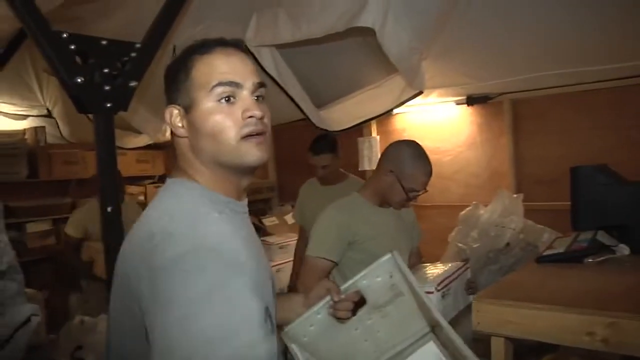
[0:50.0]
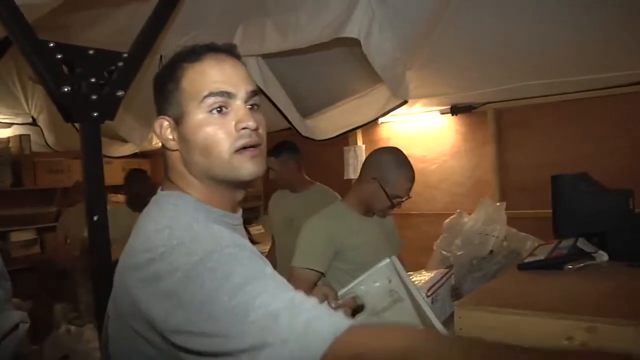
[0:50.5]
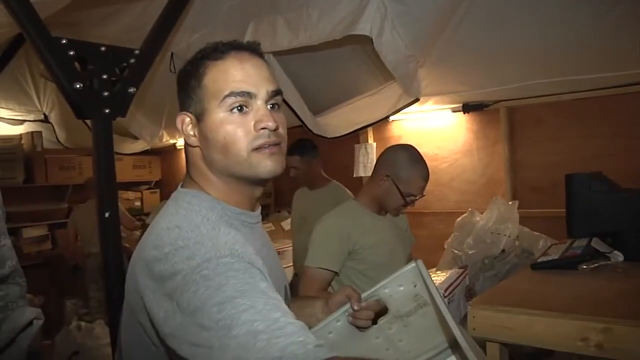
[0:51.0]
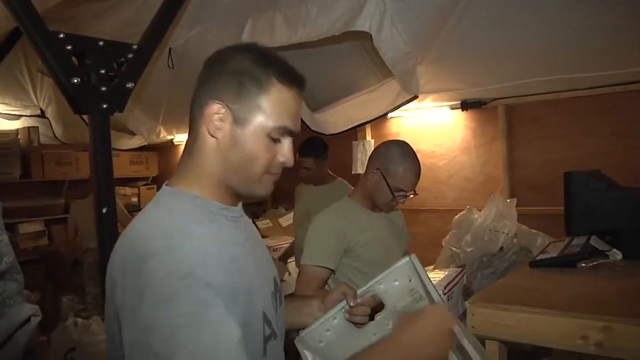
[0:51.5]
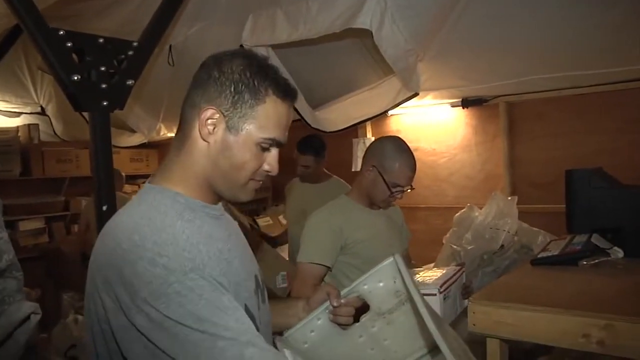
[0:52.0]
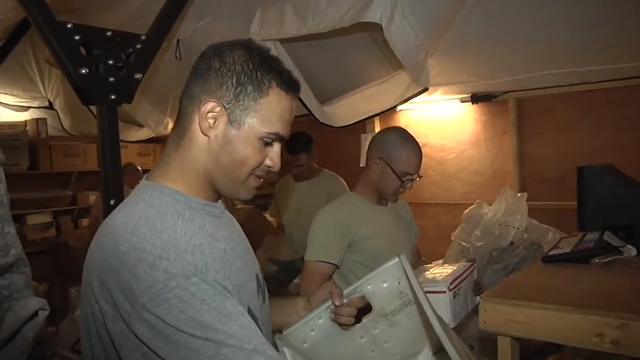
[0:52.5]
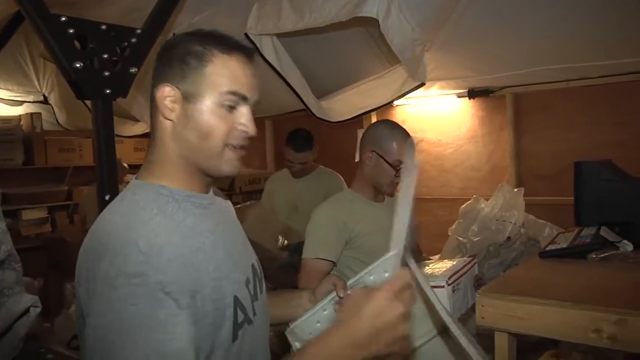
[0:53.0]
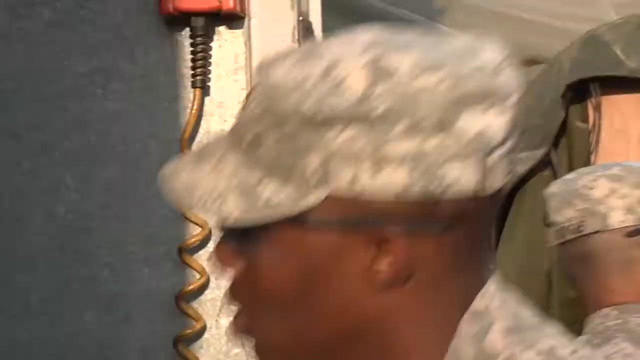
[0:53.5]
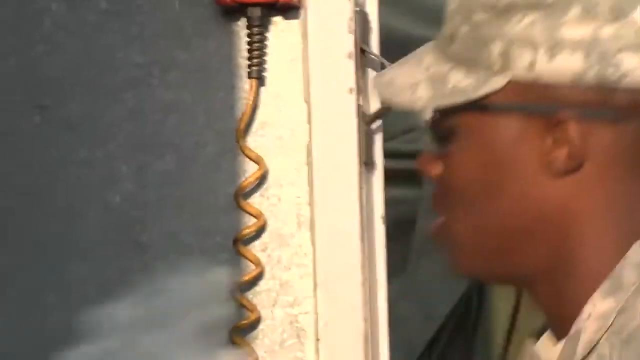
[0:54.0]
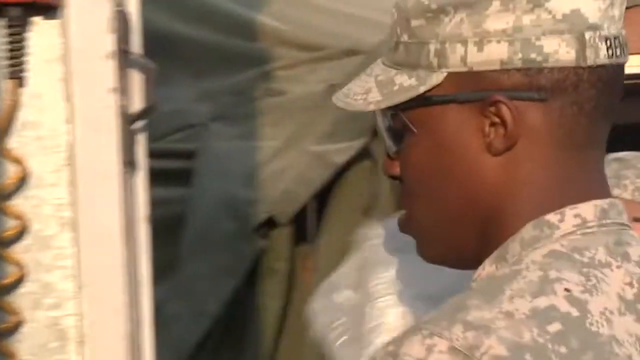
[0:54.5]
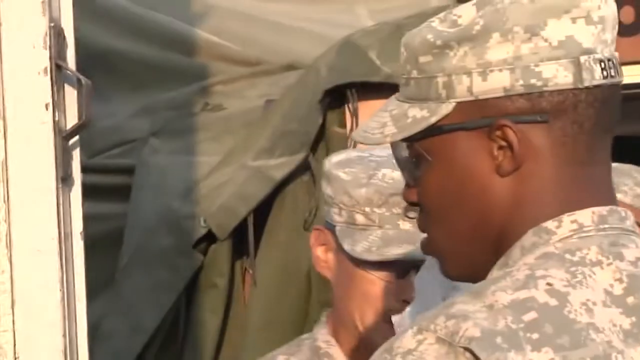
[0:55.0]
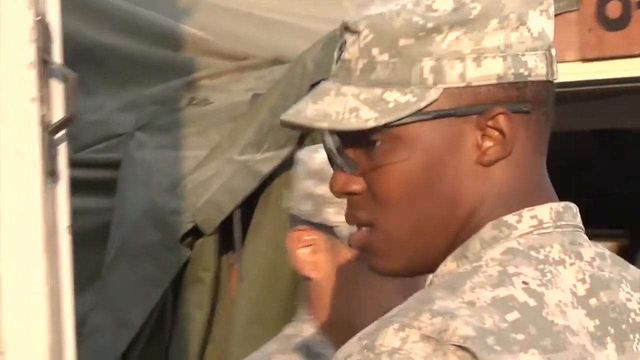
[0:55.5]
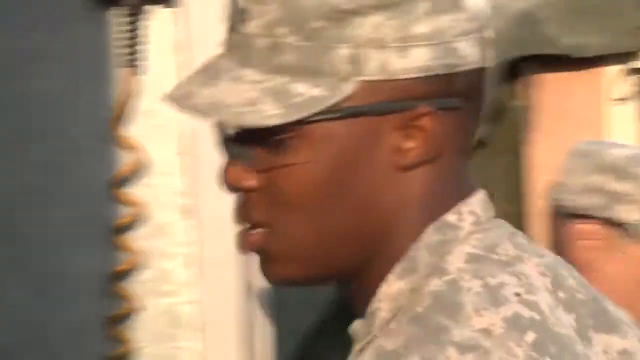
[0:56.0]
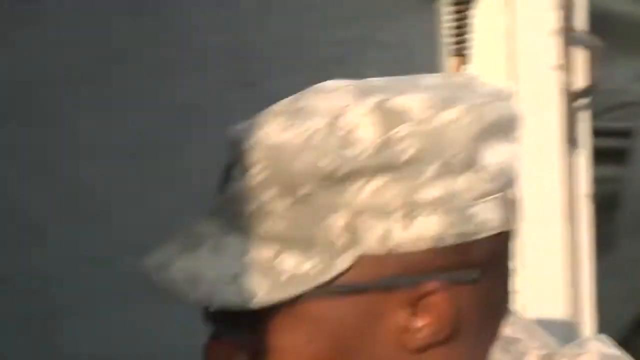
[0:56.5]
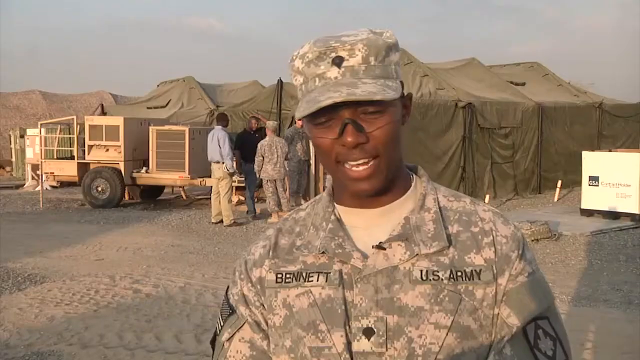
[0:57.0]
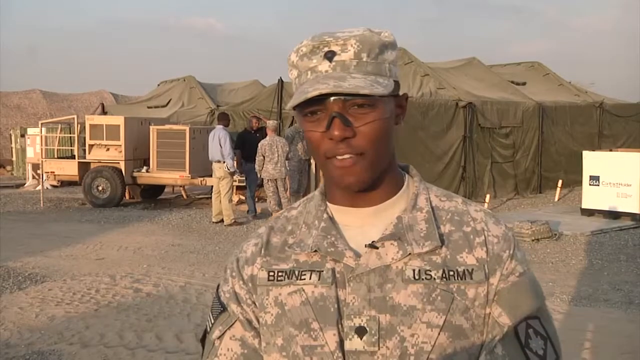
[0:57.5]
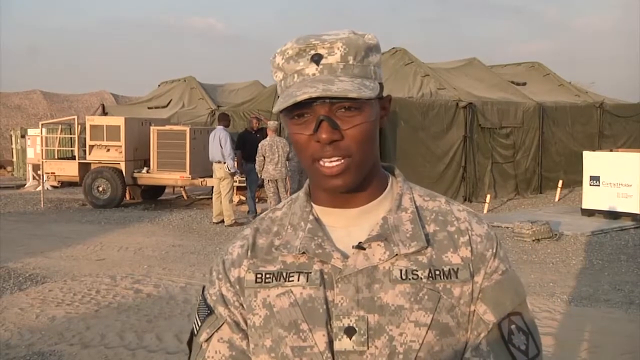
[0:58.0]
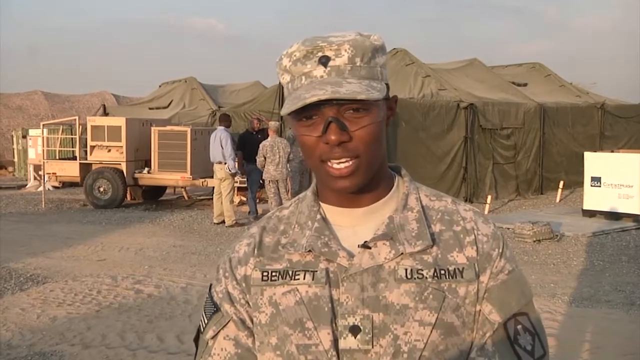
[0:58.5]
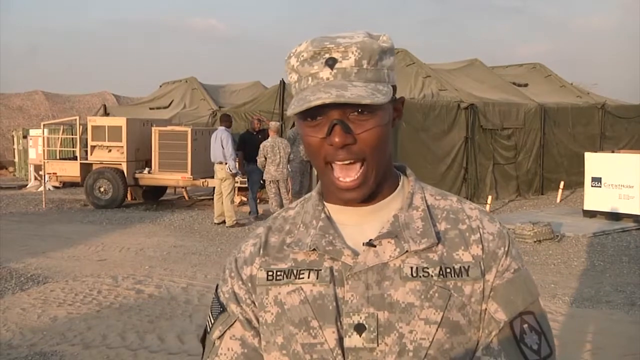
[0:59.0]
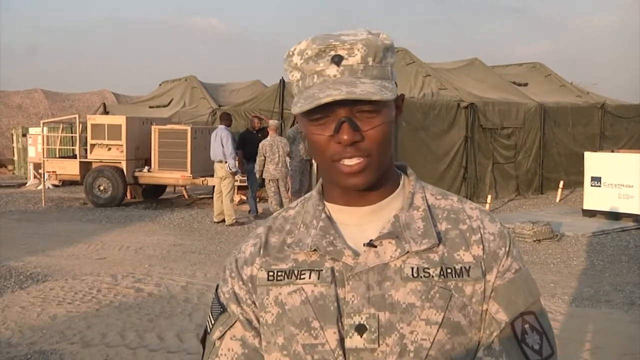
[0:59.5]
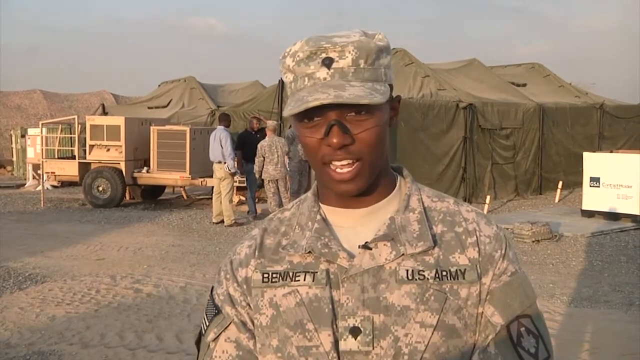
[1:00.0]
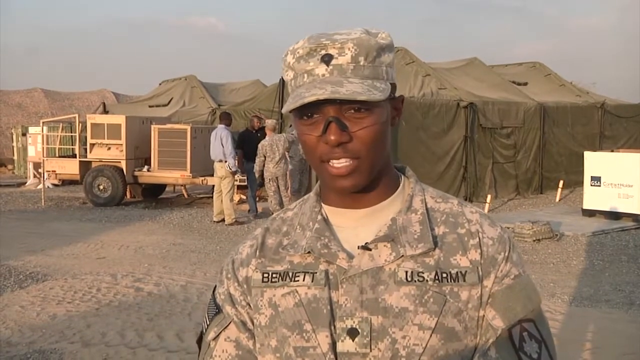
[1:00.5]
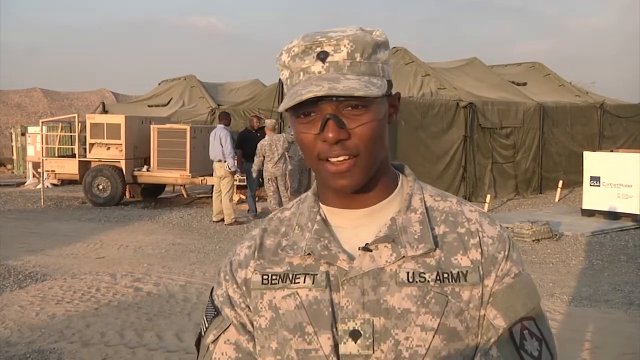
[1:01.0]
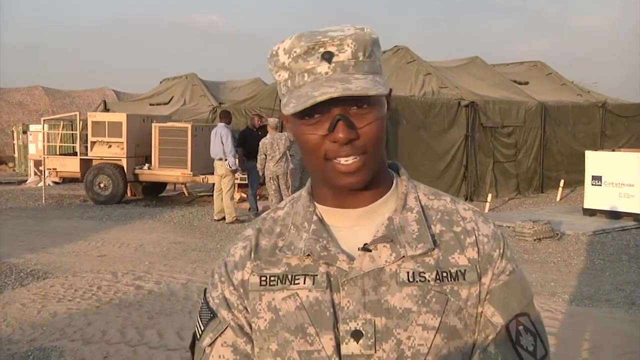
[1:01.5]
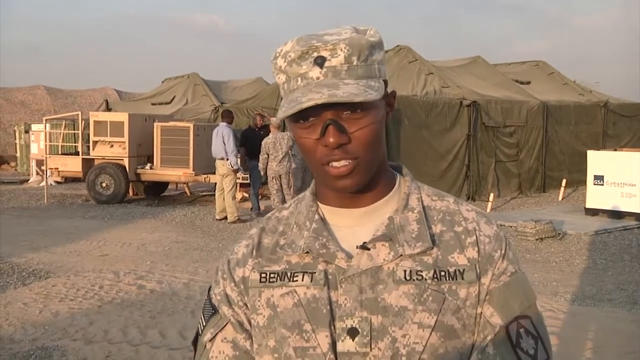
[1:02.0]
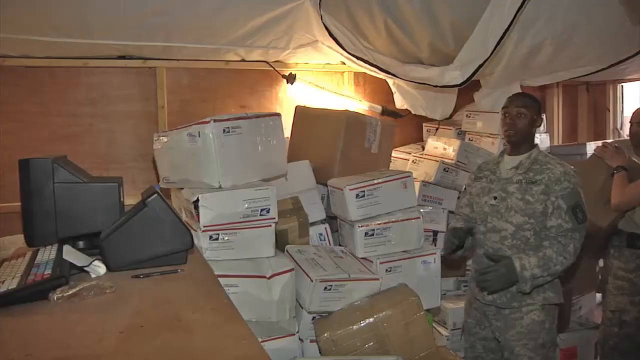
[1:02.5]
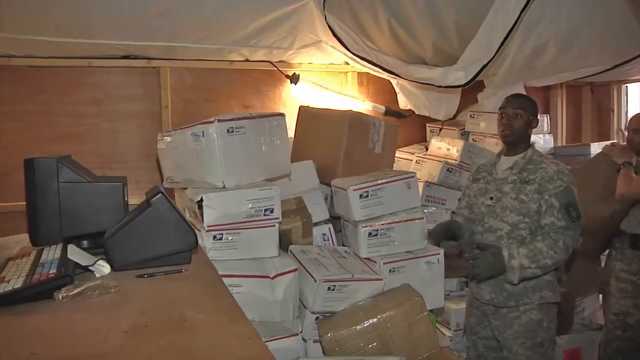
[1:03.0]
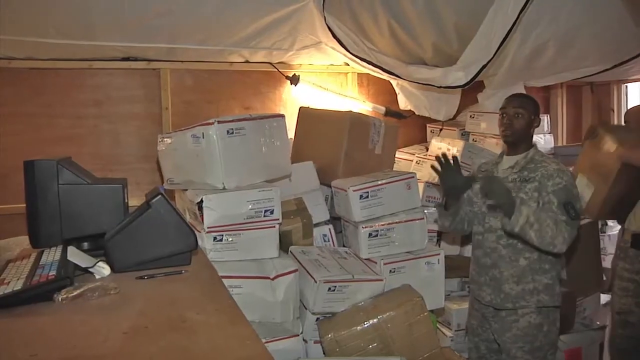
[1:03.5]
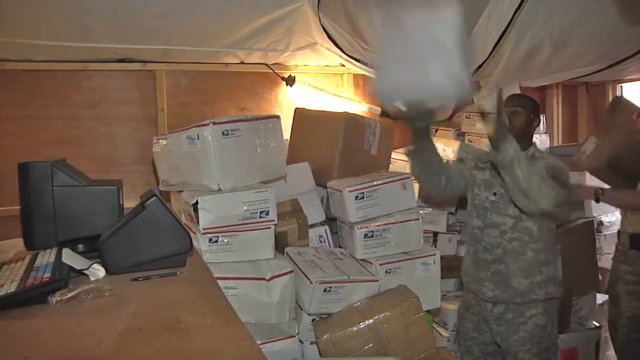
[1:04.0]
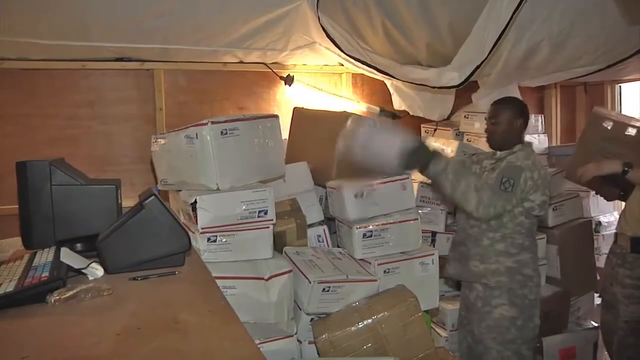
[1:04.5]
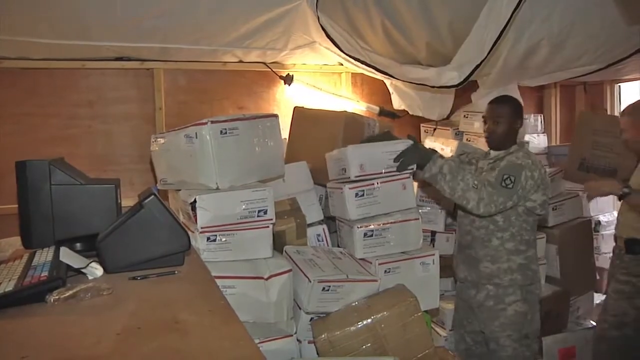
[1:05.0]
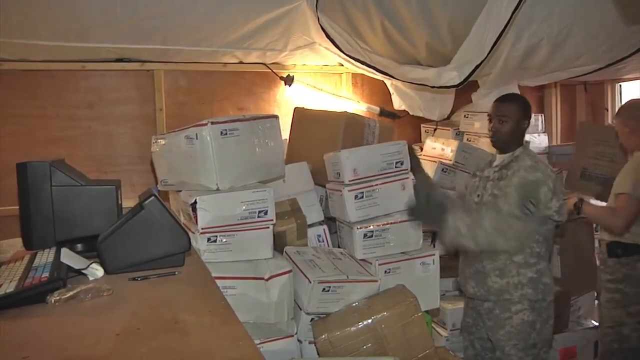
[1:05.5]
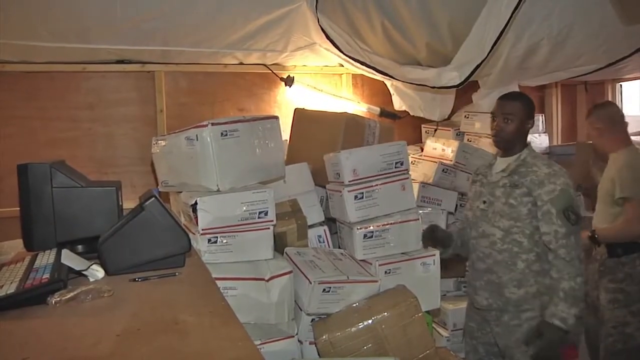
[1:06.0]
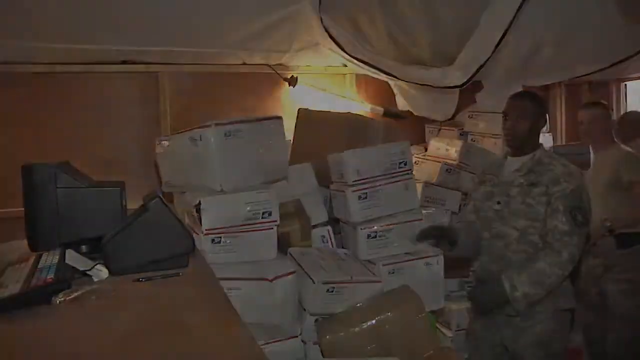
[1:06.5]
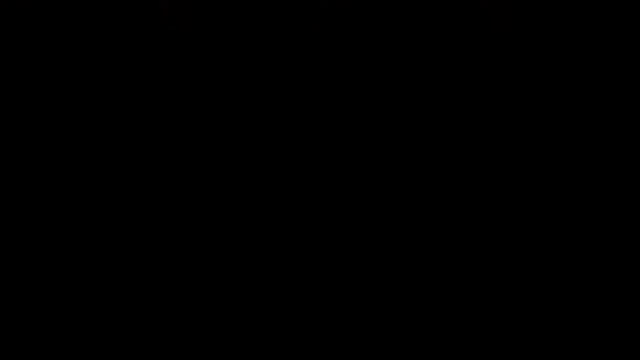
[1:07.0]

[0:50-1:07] A group of army soldiers, all male, are in a white tent surrounded by boxes. Some of the men sort through the boxes, and one holds an open box and takes out a letter in a white envelope. Next, a Black man wearing protective goggles and a green army uniform appears; "Bennett" is written on his right jacket pocket and "U.S. Army" on his left. In the background, a group of four men stand next to a trailer, which is next to a large green tent. The Black soldier faces the camera and speaks to an unseen individual. Then a Black soldier in army uniform wearing green gloves is shown. An unseen person throws a white box at him; he catches it and places it on a box. Next to him is a large pile of boxes, and behind him a white soldier sorts through the boxes.